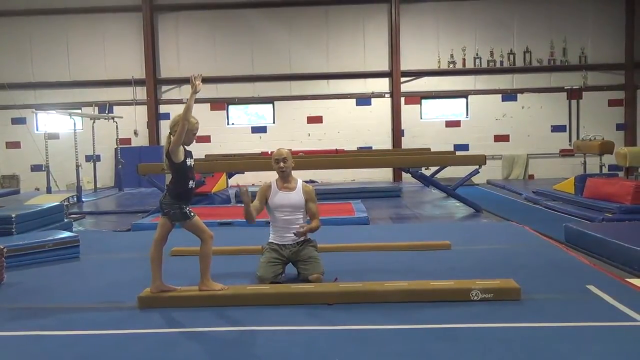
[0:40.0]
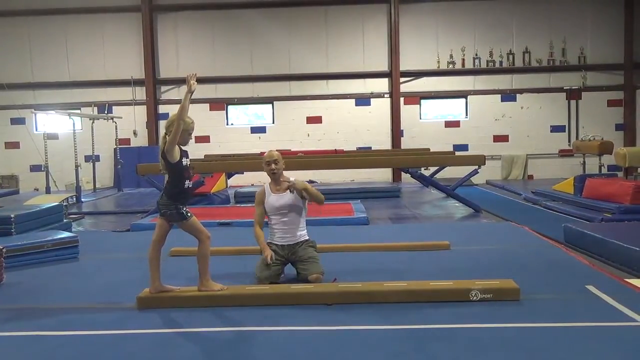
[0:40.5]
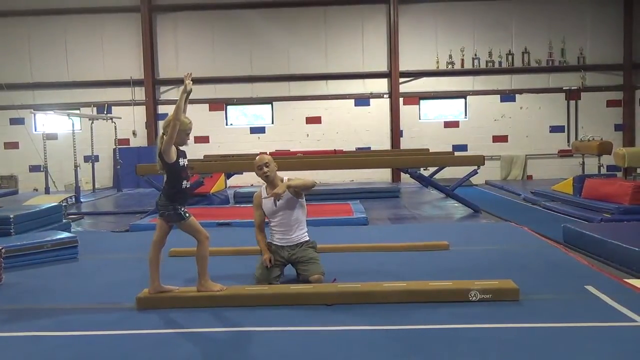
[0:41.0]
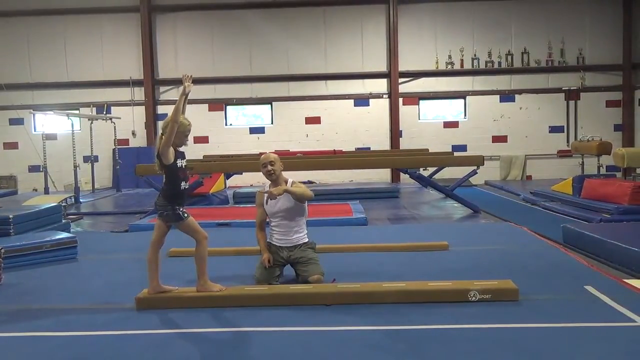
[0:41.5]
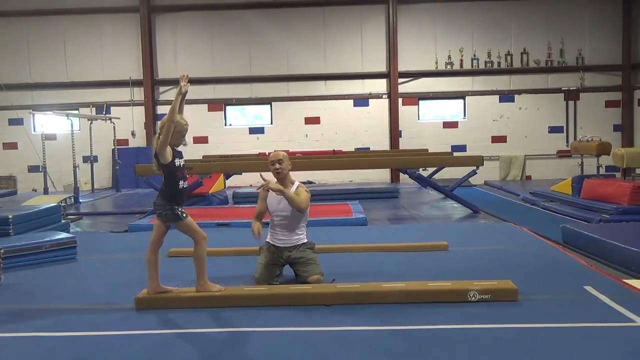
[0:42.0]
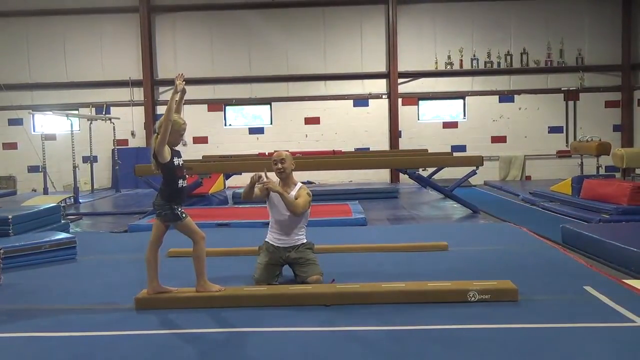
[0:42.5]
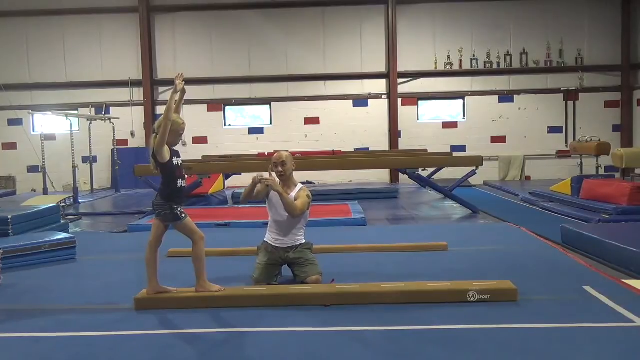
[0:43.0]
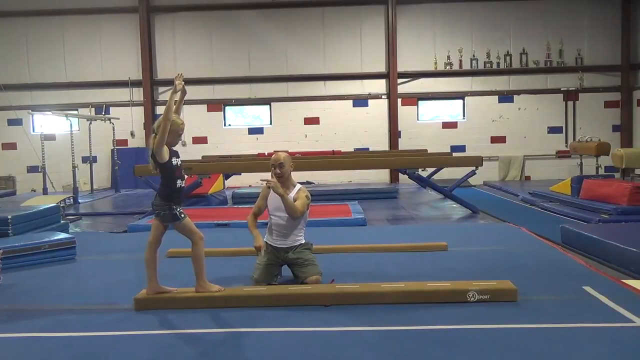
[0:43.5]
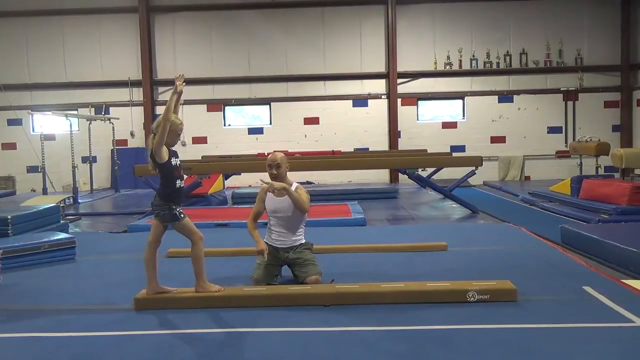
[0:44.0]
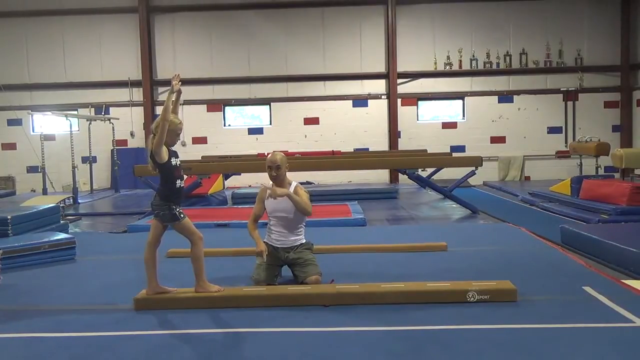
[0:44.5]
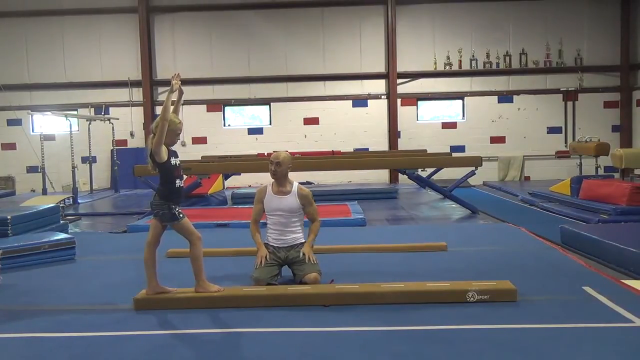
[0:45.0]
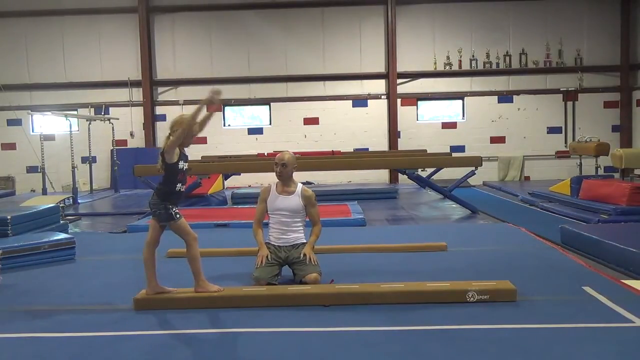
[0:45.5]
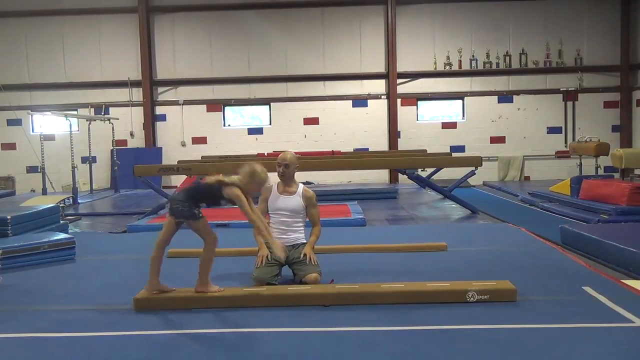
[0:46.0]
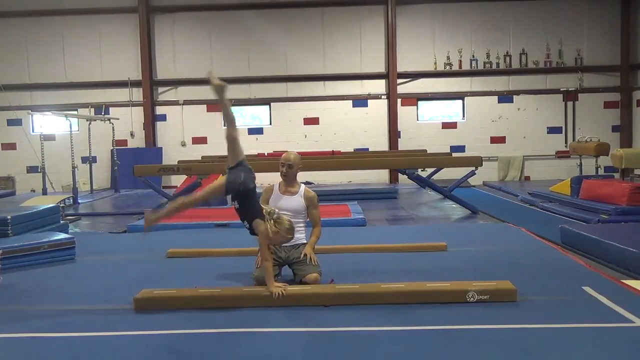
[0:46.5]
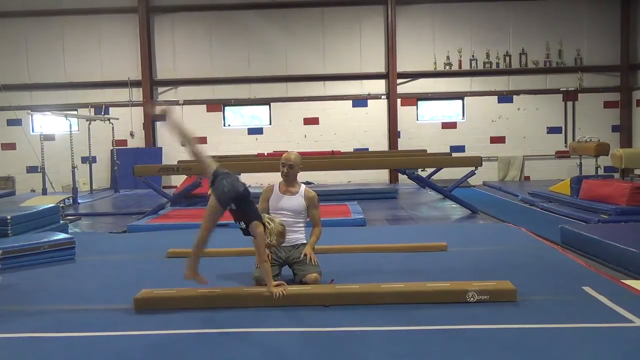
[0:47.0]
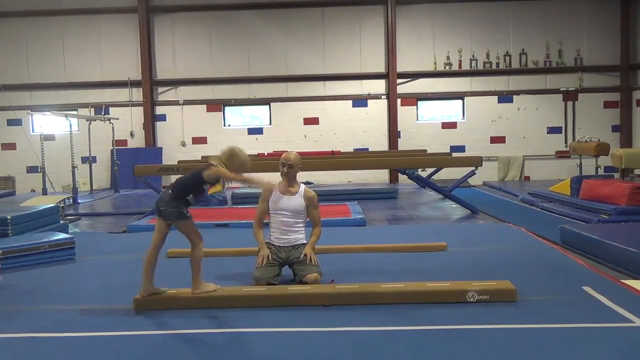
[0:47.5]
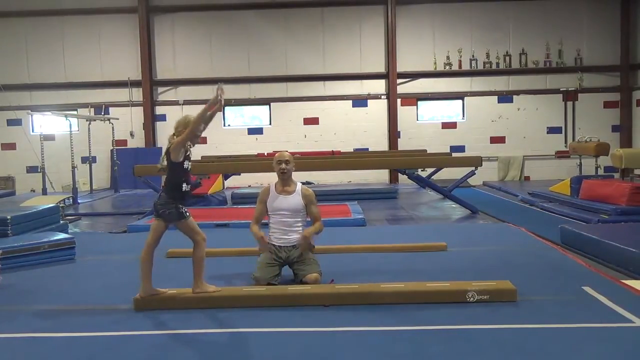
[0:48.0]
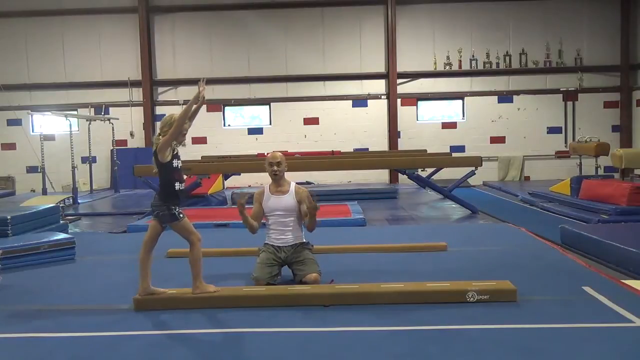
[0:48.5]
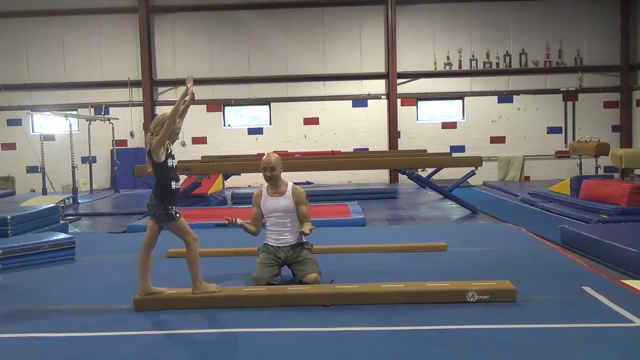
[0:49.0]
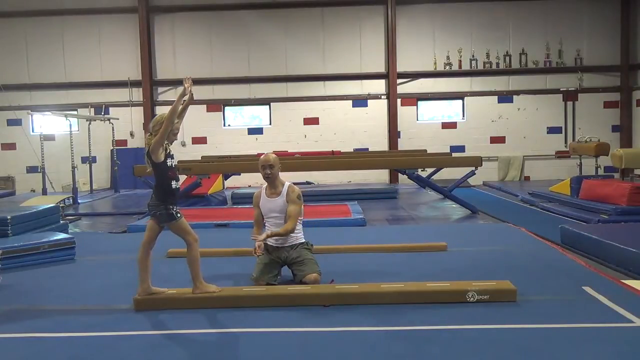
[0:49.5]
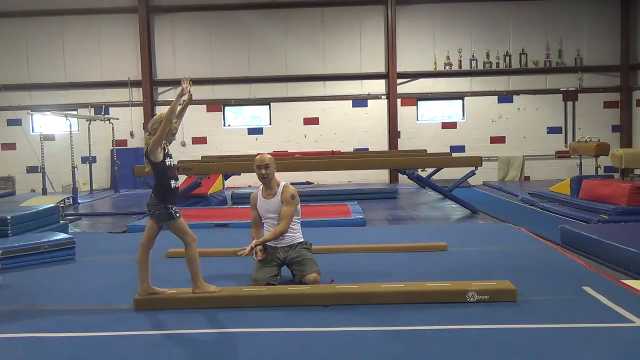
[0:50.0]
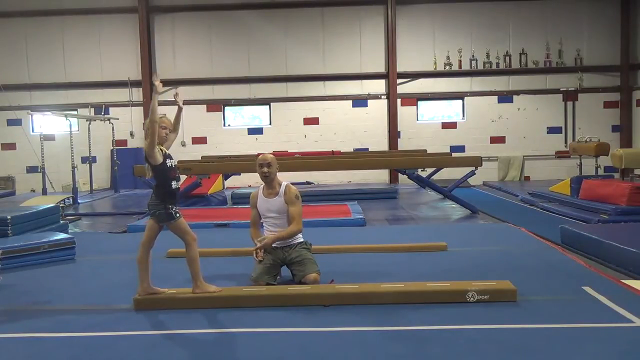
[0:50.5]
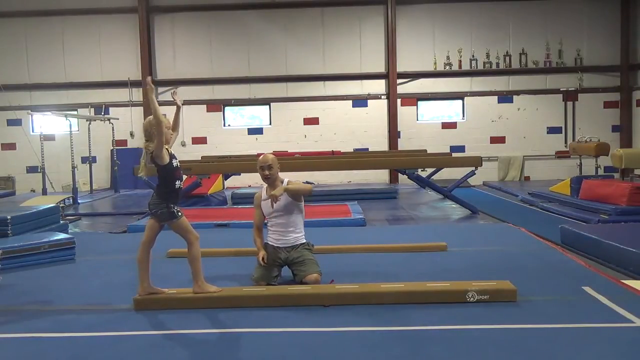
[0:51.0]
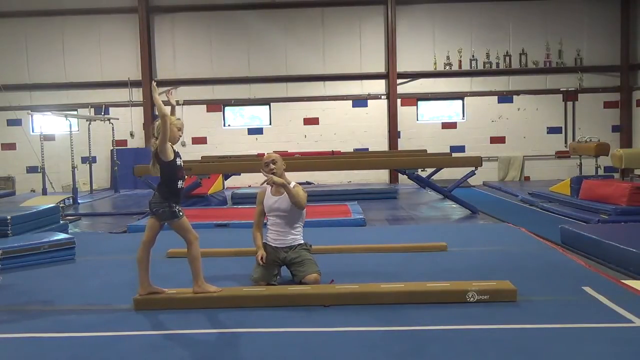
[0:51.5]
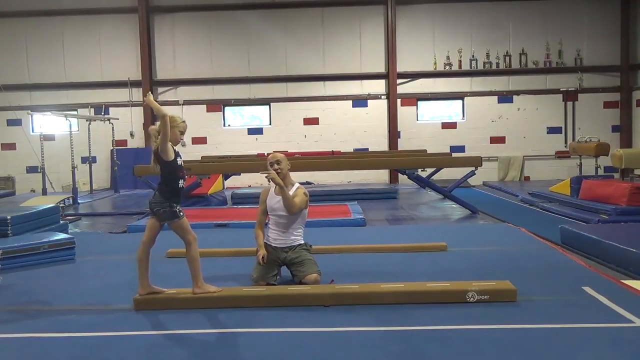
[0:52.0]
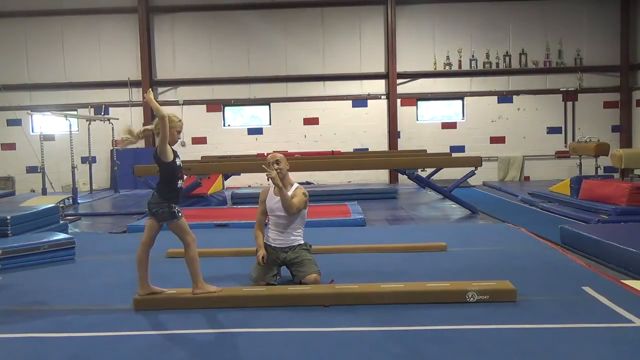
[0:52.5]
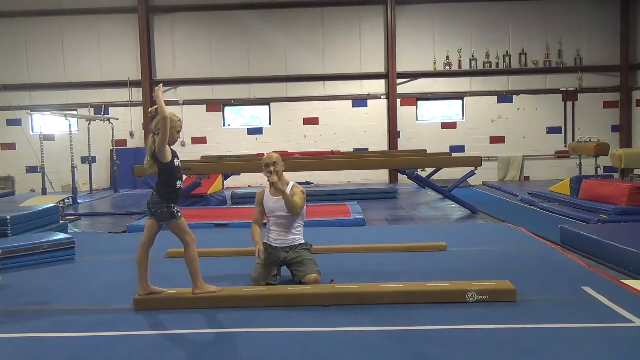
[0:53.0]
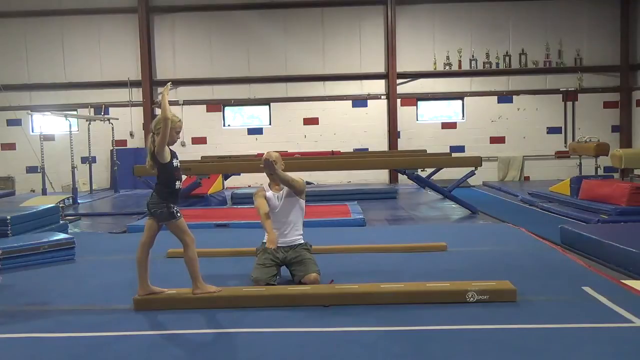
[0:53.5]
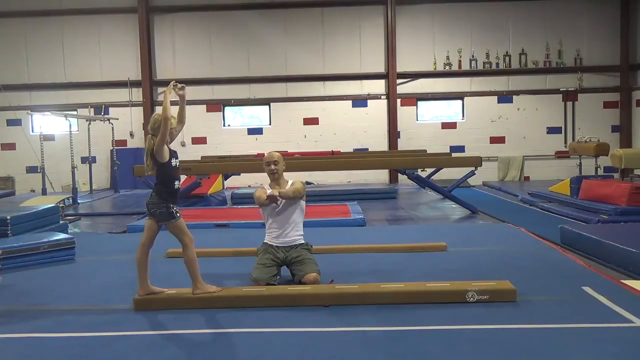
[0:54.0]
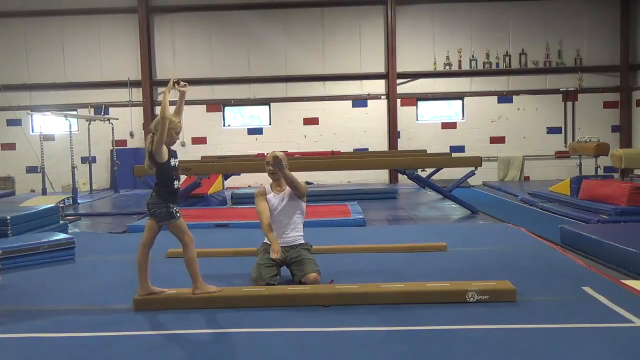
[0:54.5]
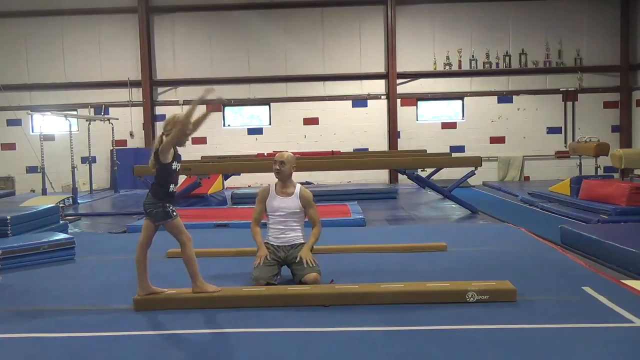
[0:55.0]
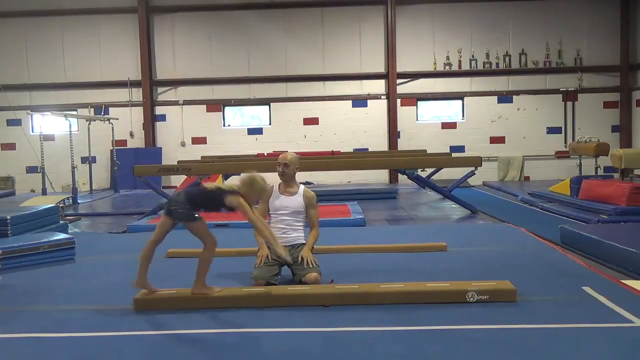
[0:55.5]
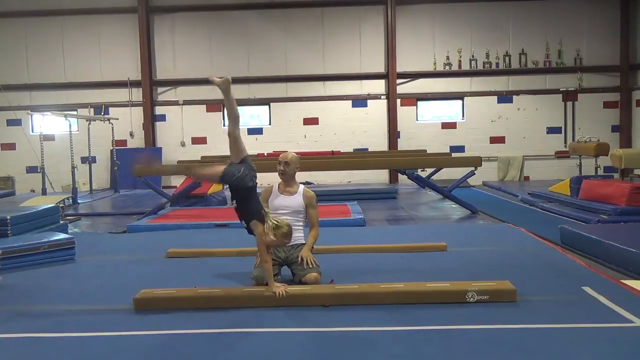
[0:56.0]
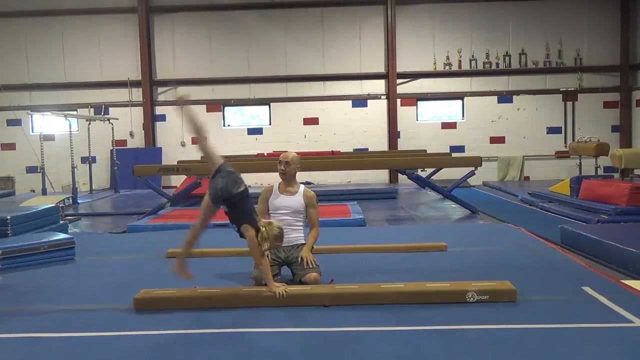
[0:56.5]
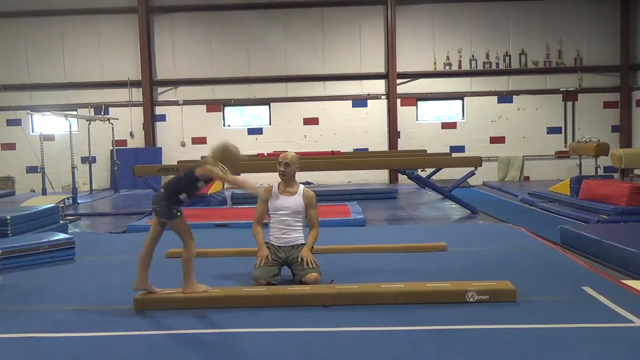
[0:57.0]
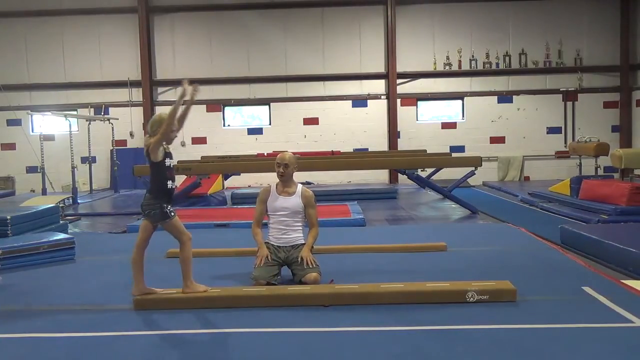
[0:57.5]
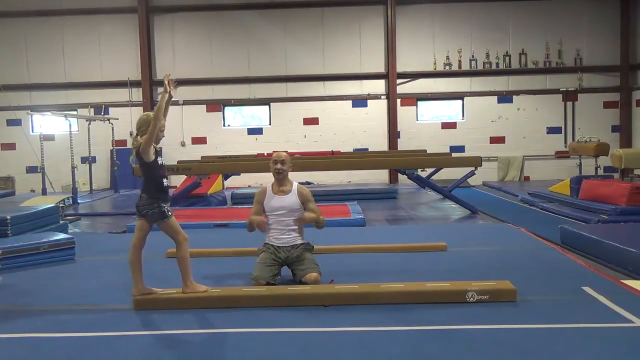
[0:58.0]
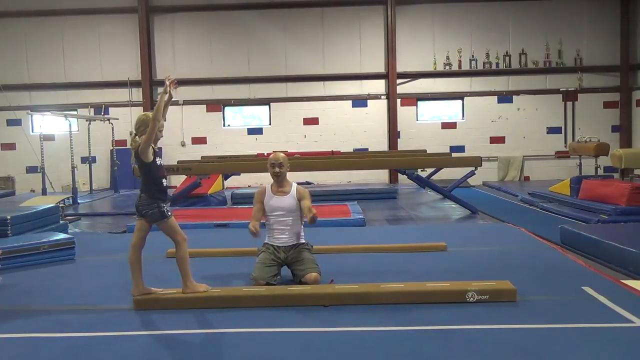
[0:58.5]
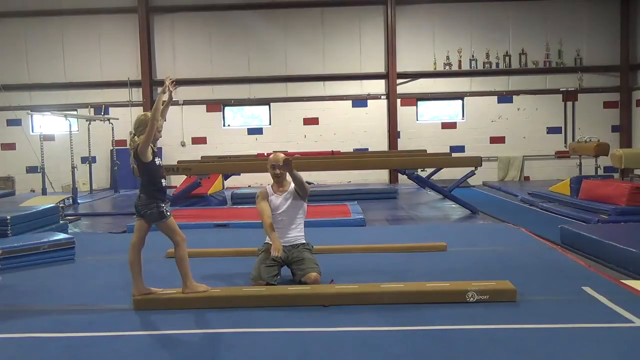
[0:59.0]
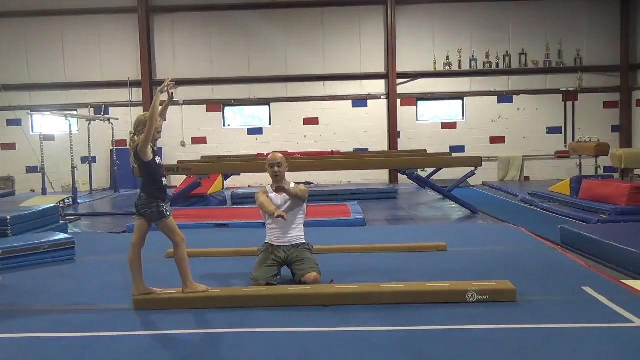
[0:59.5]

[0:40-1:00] A little girl does flips on a beam while a man kneels behind the beam, directing her so she does the flip correctly. She performs the flip correctly, and the man right behind her shows her how to focus as she makes her way to the end of the beam. At the bottom of the frame are blue mats belonging to the gymnastics area. On the right side of the background, trophies of various sizes are lined up against the wall, and a red and blue square are painted on the white wall in the background.